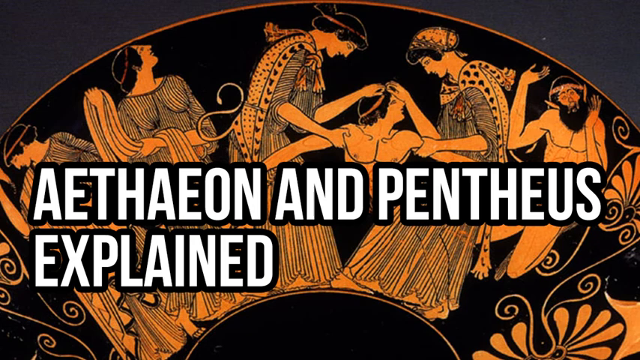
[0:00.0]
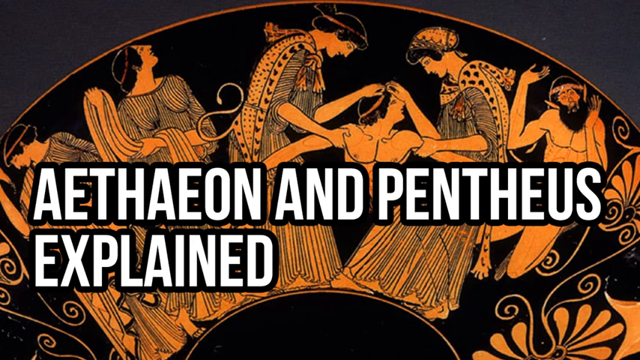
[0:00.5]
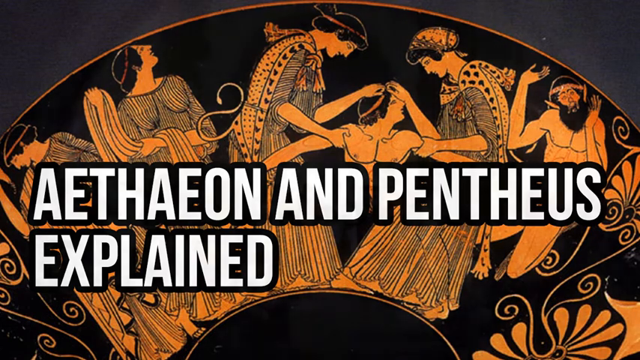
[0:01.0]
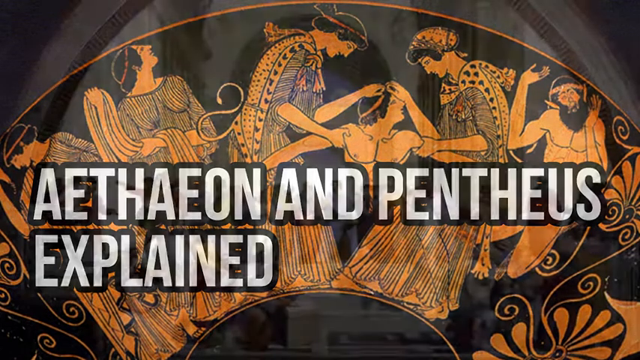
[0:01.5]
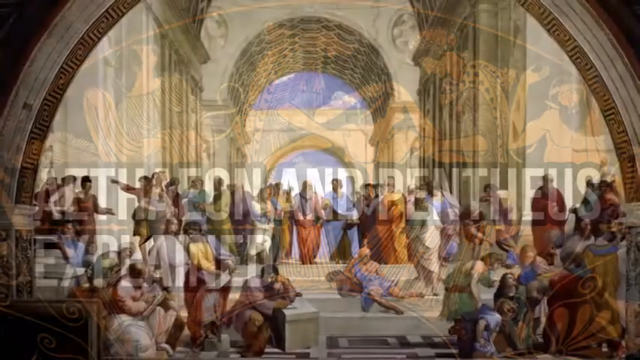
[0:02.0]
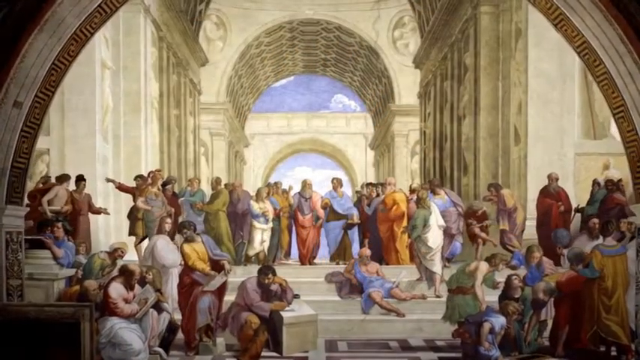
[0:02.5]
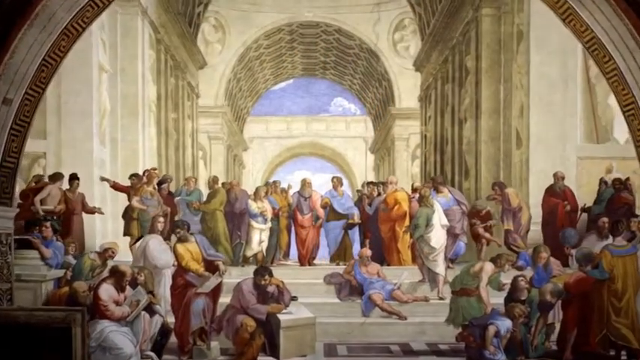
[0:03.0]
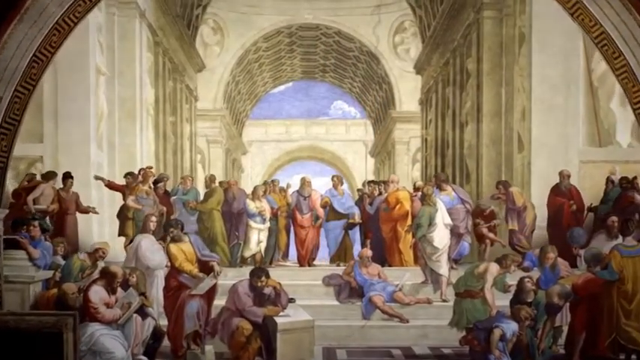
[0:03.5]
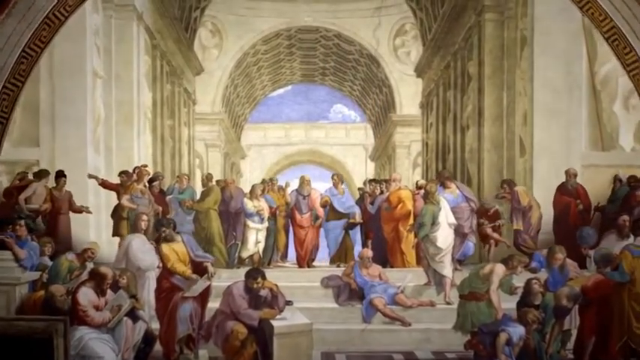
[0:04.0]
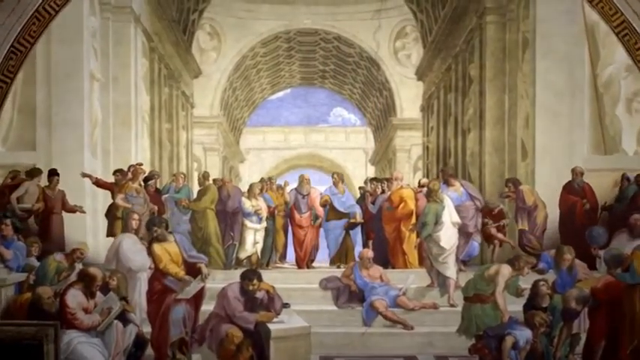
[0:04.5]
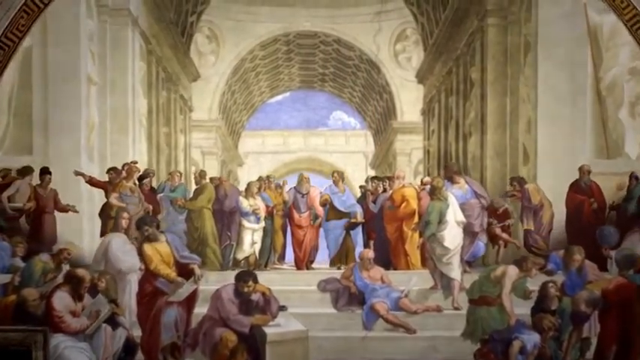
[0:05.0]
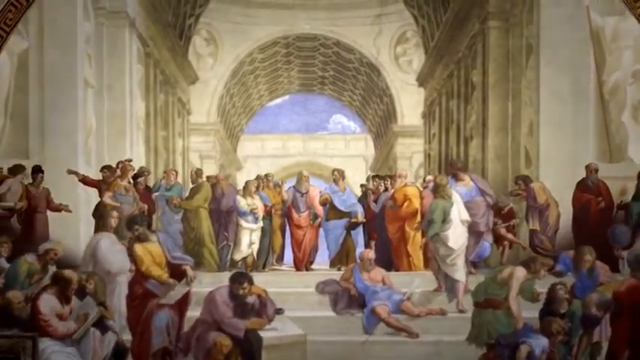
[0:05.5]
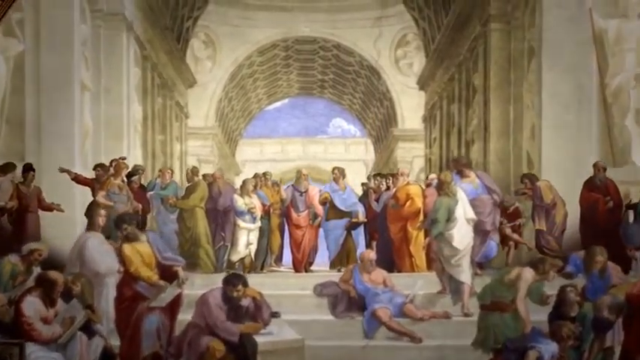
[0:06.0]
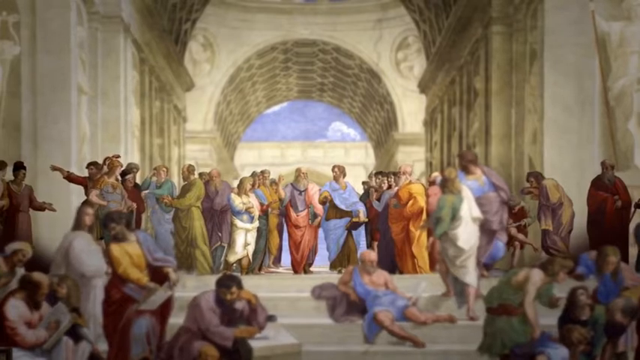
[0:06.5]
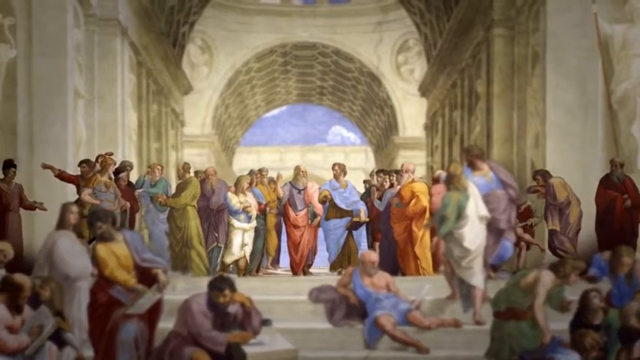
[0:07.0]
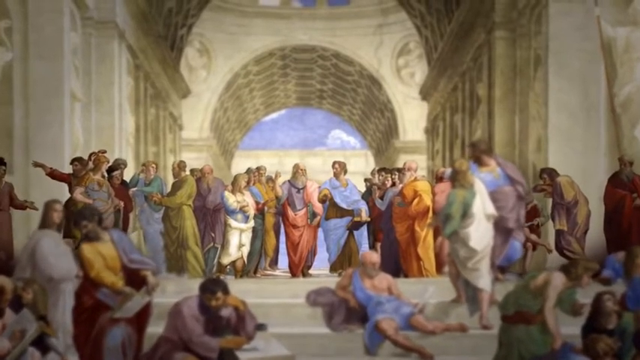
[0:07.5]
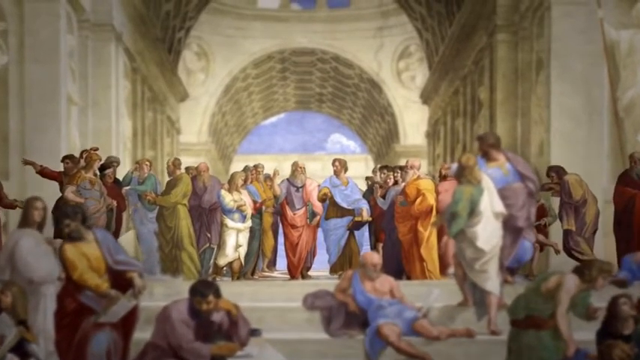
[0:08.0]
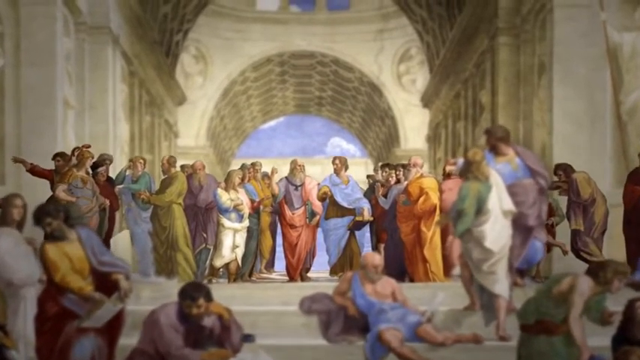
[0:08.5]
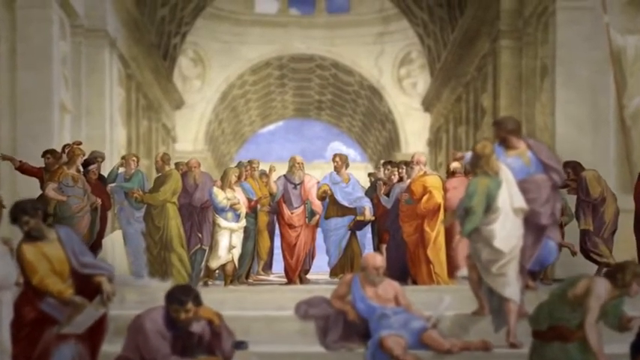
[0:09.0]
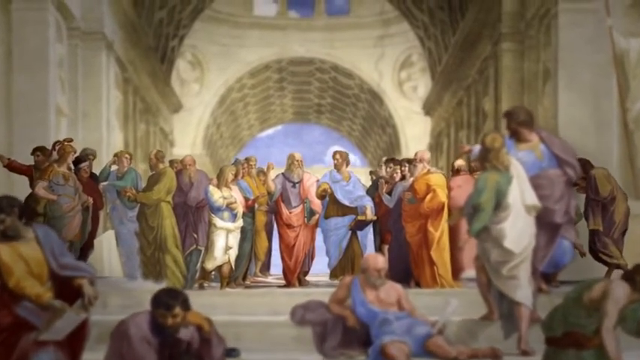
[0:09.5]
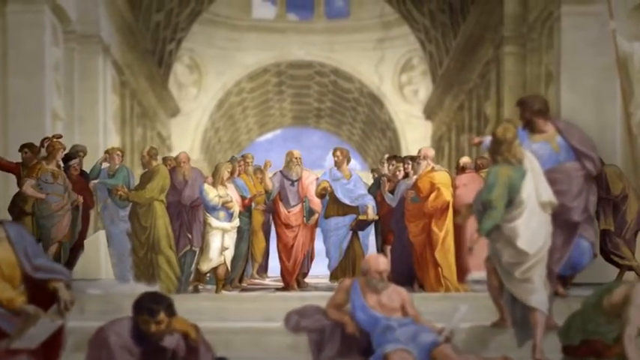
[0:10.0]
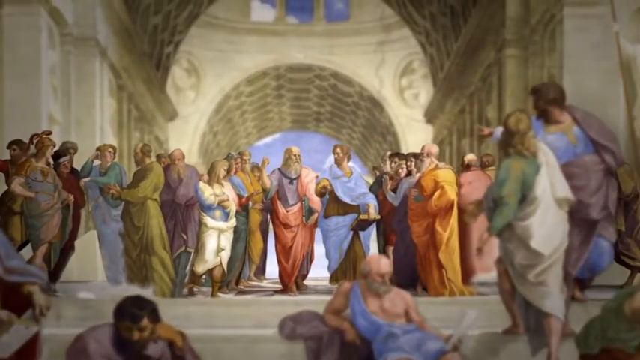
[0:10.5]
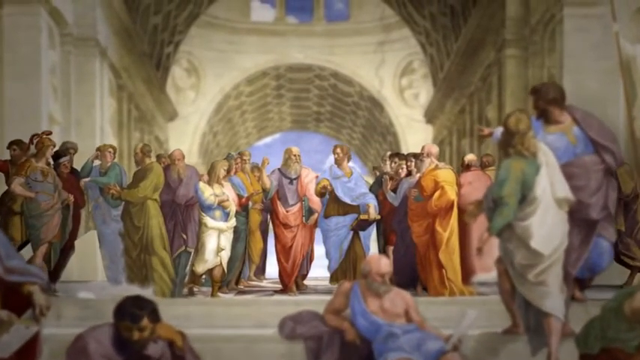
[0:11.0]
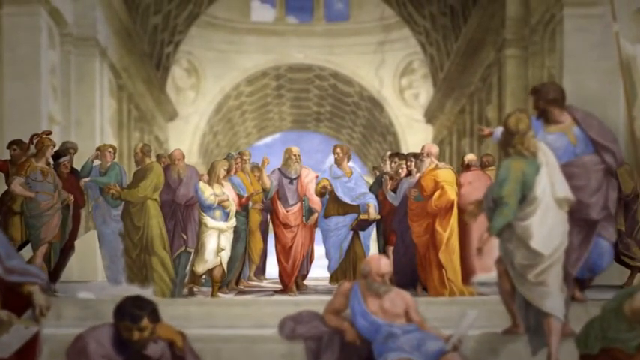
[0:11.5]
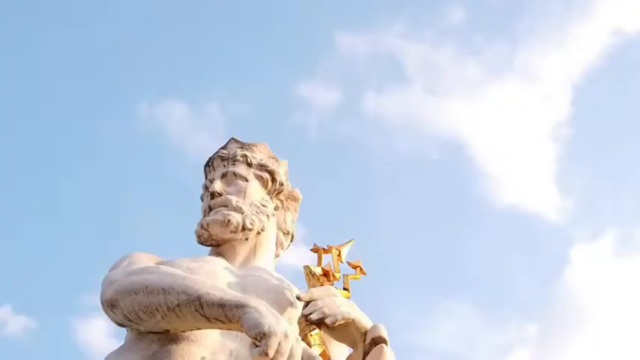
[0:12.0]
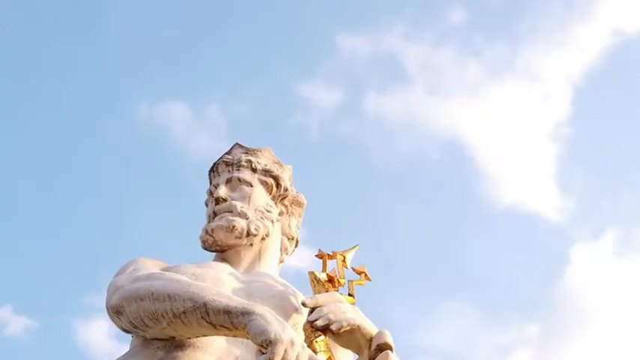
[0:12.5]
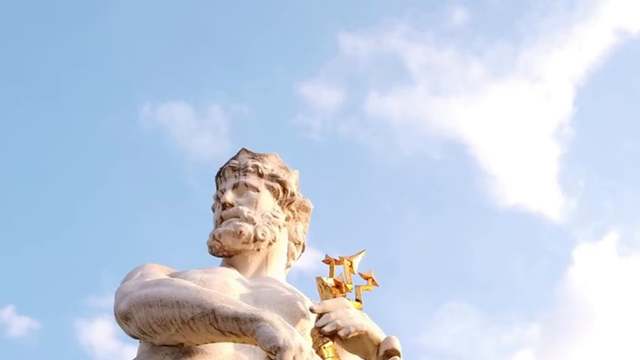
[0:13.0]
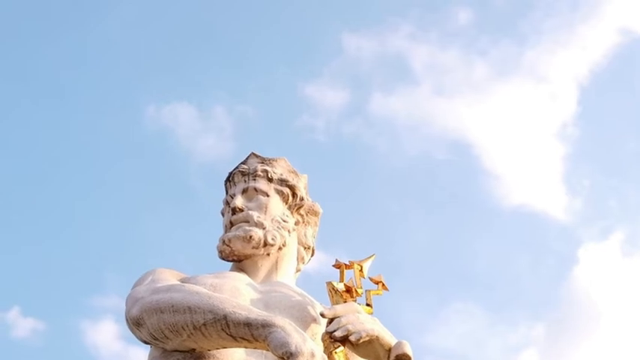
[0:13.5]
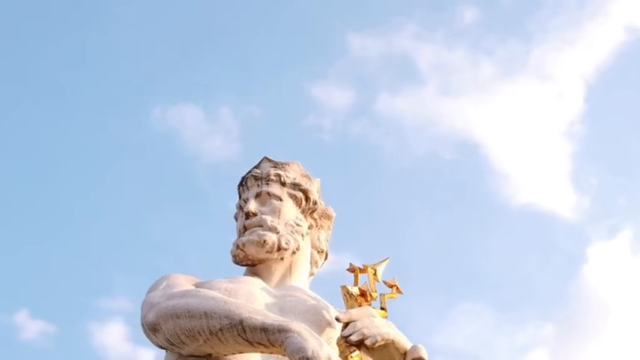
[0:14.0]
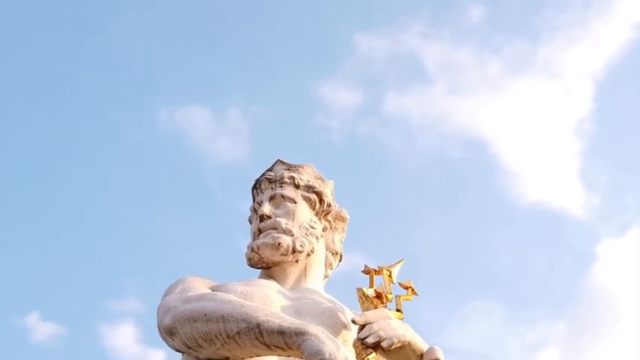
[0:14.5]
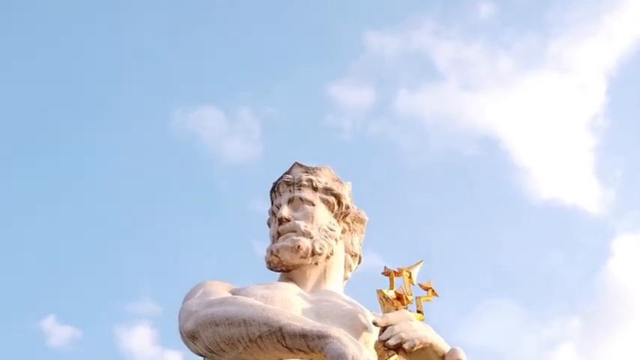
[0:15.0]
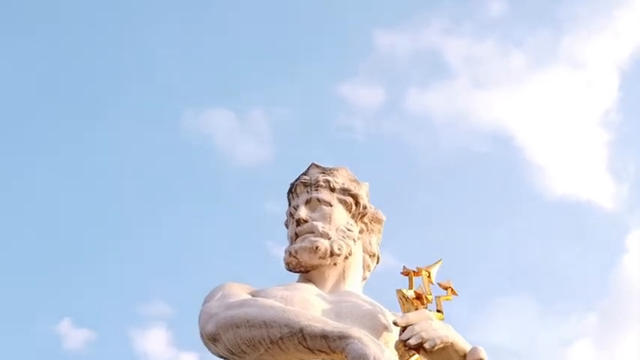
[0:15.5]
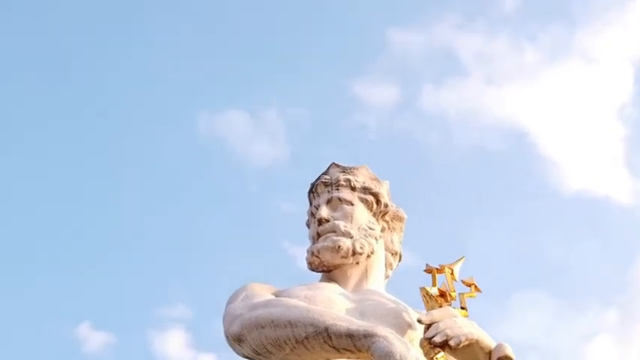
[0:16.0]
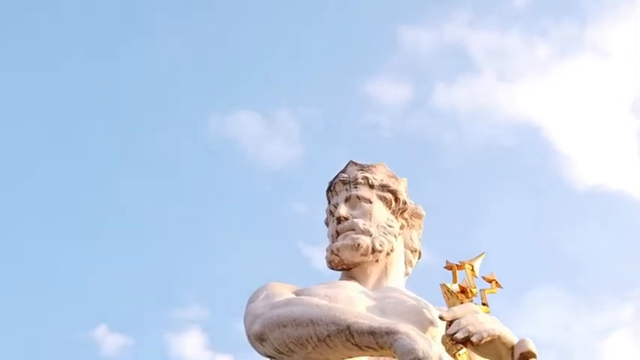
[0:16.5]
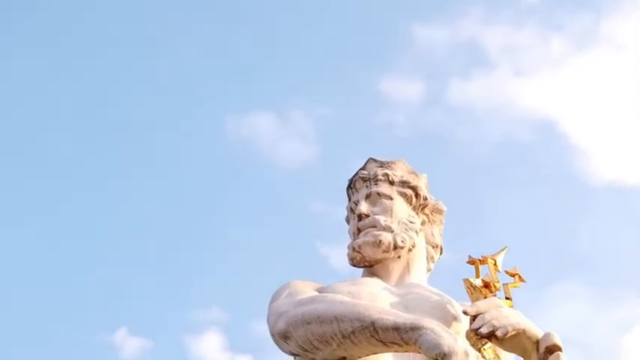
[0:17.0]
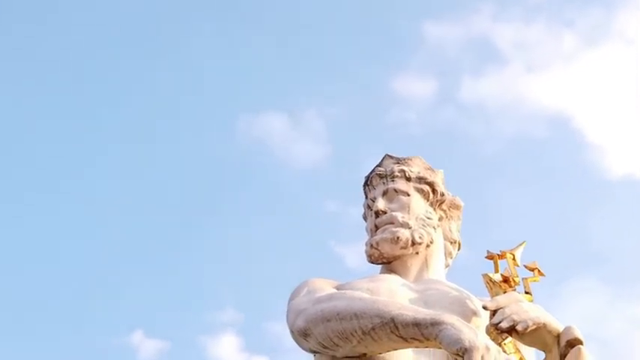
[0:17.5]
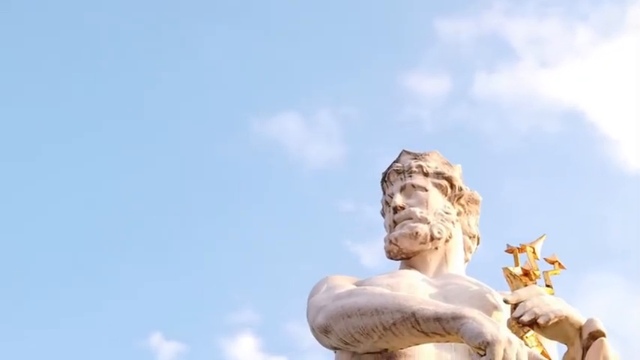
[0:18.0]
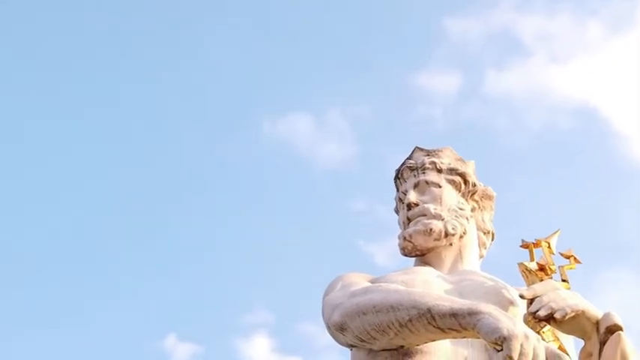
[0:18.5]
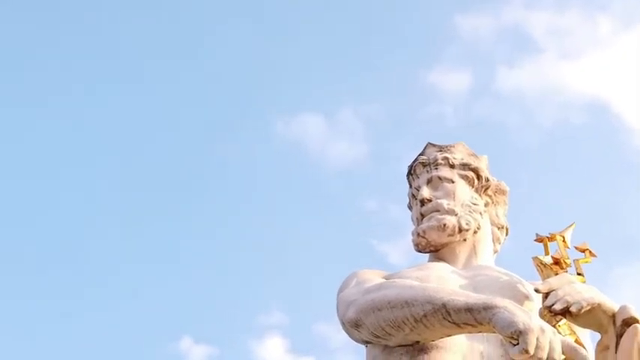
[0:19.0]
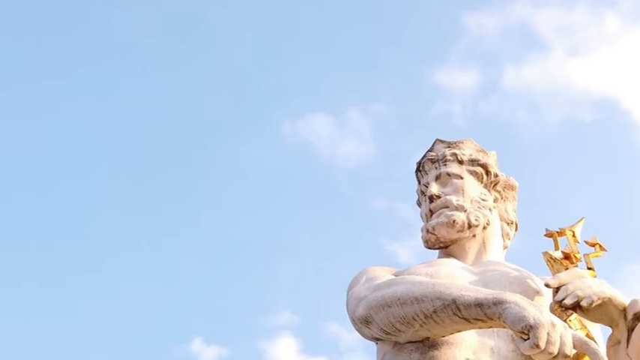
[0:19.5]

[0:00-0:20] Several old oil paintings appear, one of them a painting by Raphael in a classical setting where everyone wears colourful robes, with a couple of archways in the background. At its centre is a figure with white hair and a white, flowing beard, dressed in a pink robe over a purple tunic. The video's title, ending in "Pentheus Explained", is shown. The video zooms in on the painting, and the figures in it come into the foreground as the background turns blurry. It then transitions to an outdoor photograph of a white marble statue of a man with curly hair and a curly beard, wearing a crown. The view is from underneath, looking up at the statue, which is perhaps on a plinth or pedestal, with a blue sky and some white clouds behind him. In his left hand he holds some golden arrows that look bent. The camera pans from left to right, so the statue drifts from the centre of the image to the right side of the frame.